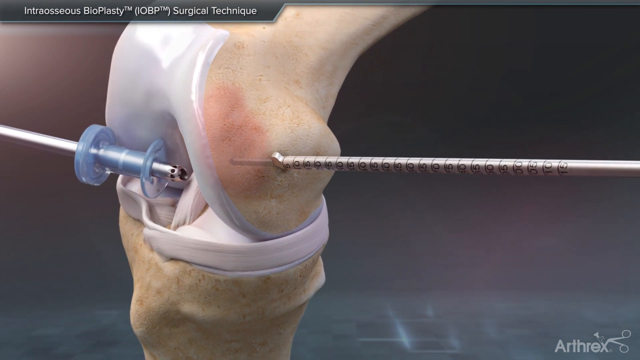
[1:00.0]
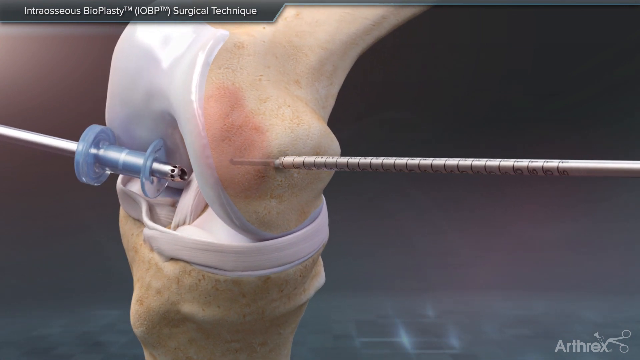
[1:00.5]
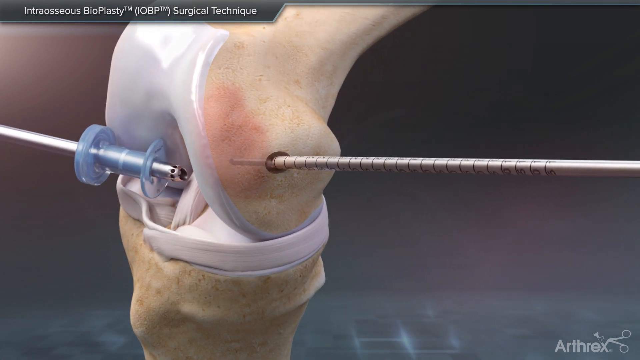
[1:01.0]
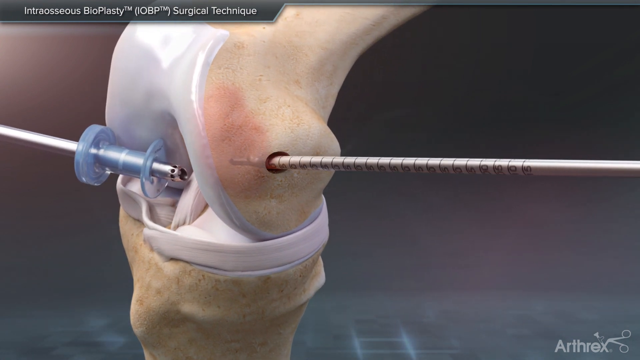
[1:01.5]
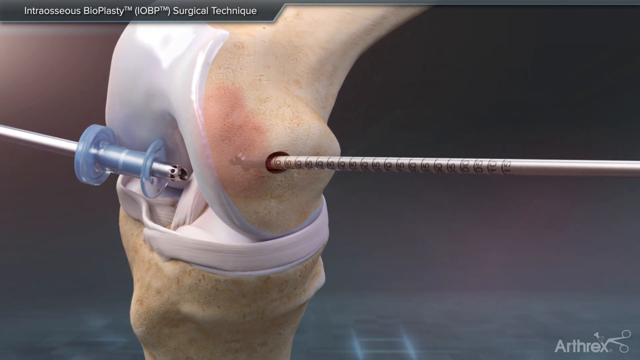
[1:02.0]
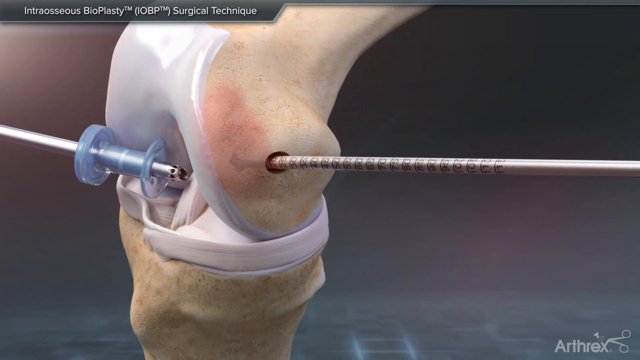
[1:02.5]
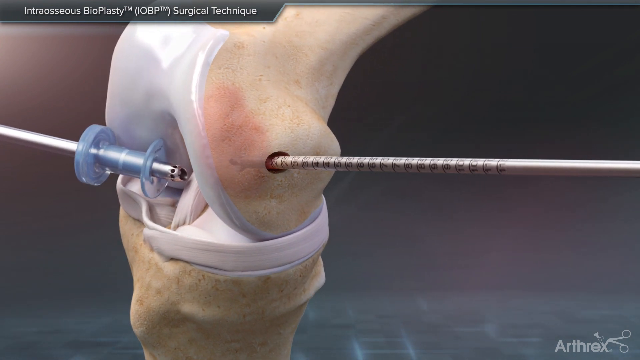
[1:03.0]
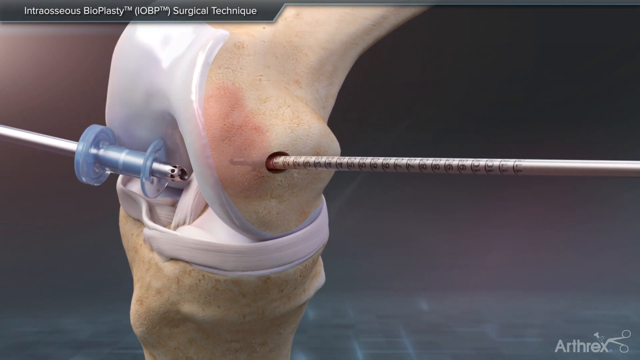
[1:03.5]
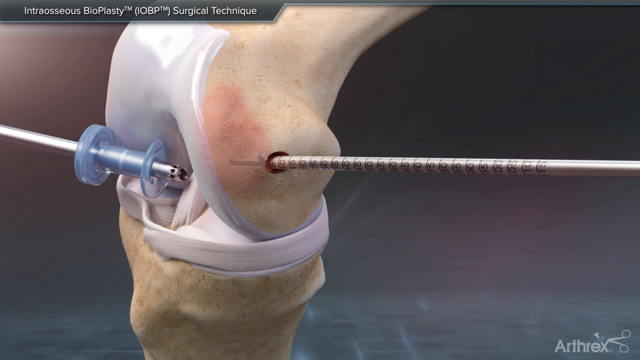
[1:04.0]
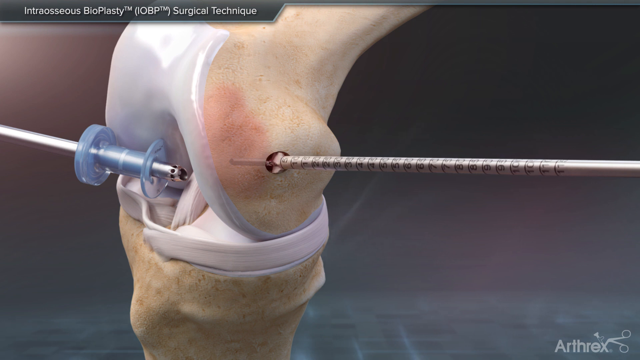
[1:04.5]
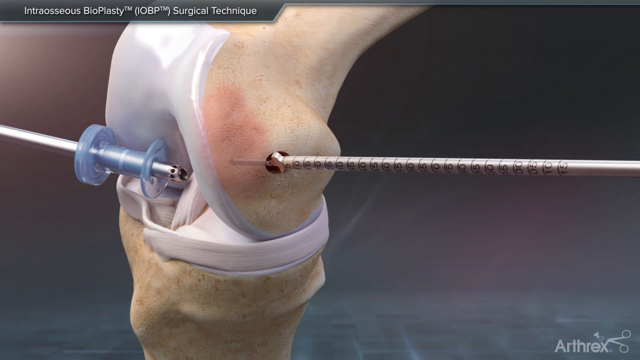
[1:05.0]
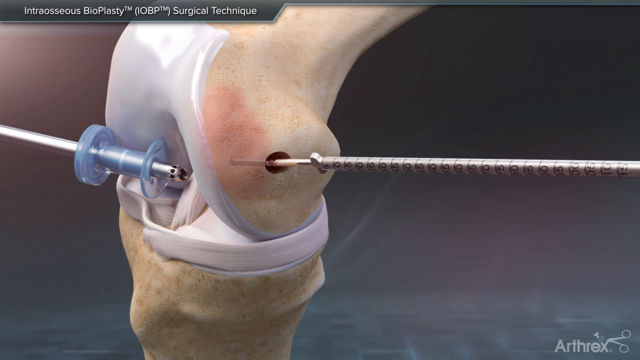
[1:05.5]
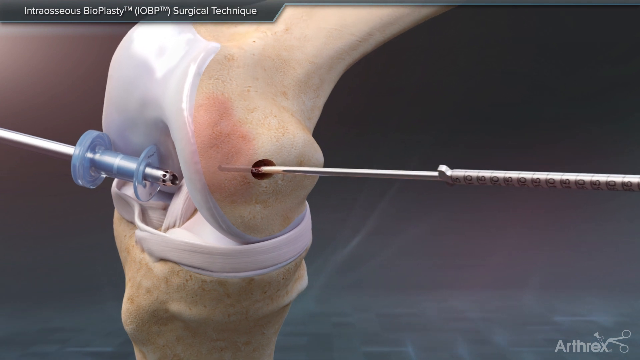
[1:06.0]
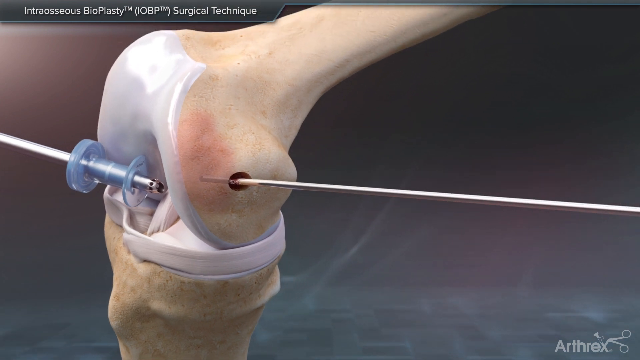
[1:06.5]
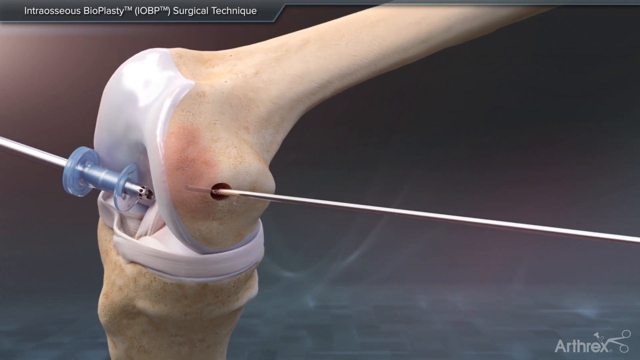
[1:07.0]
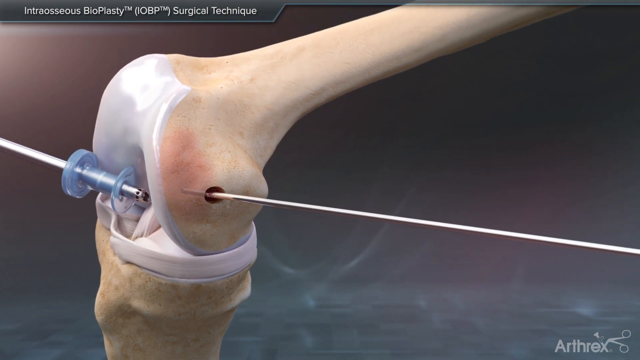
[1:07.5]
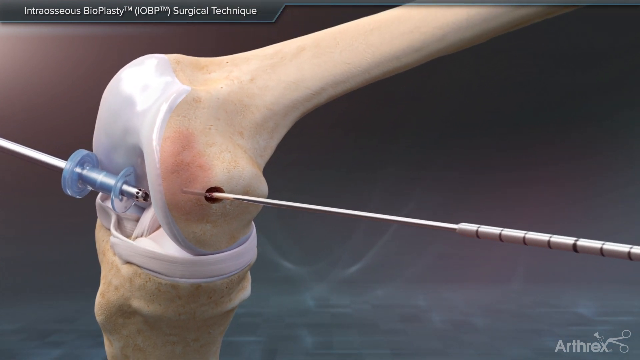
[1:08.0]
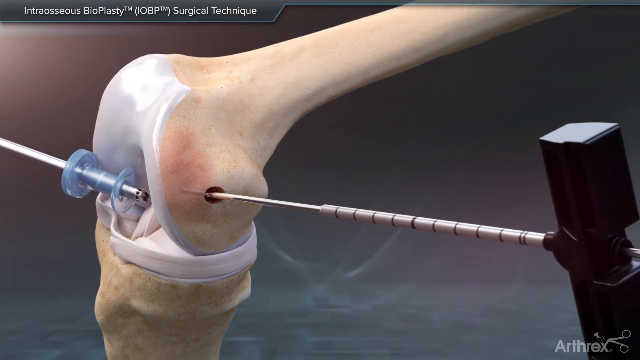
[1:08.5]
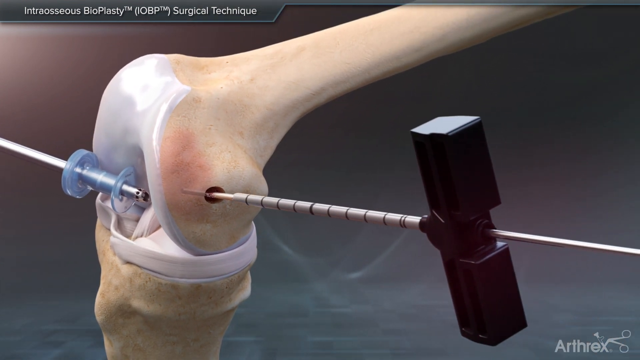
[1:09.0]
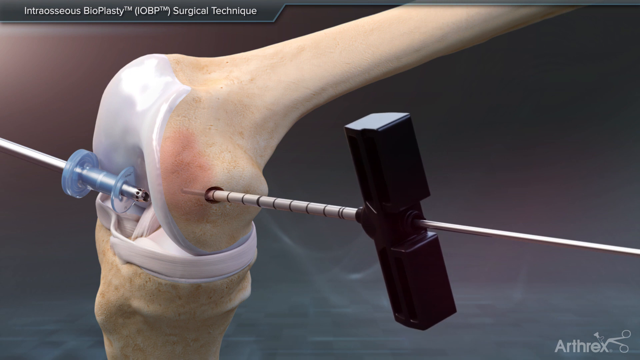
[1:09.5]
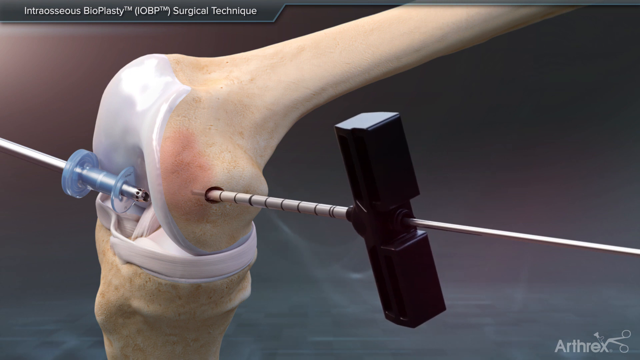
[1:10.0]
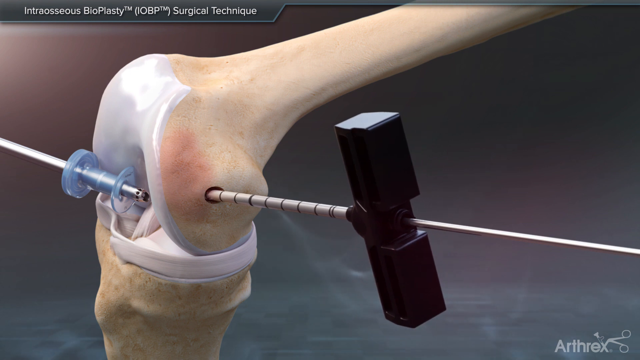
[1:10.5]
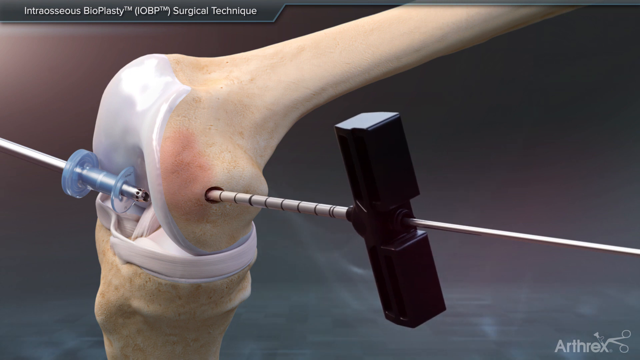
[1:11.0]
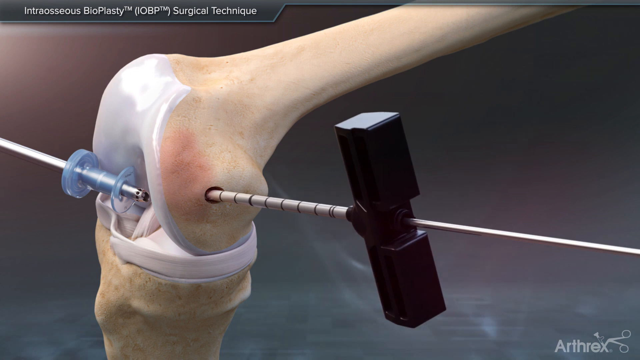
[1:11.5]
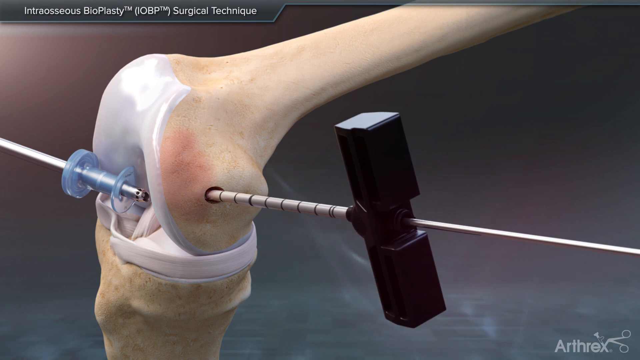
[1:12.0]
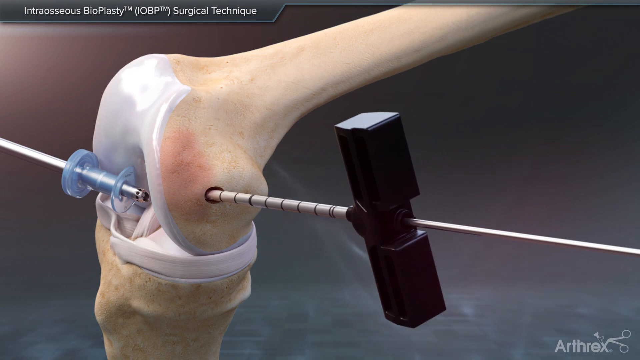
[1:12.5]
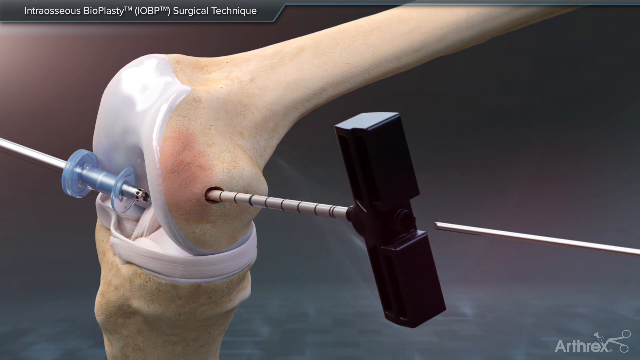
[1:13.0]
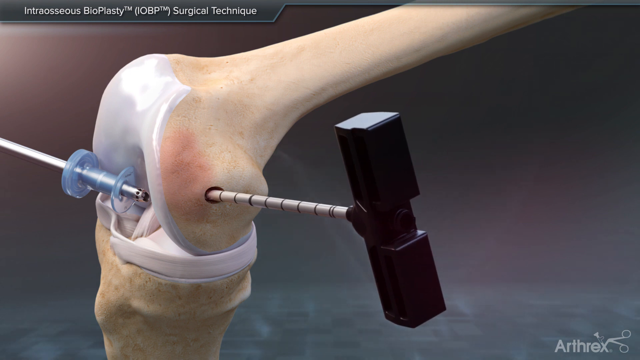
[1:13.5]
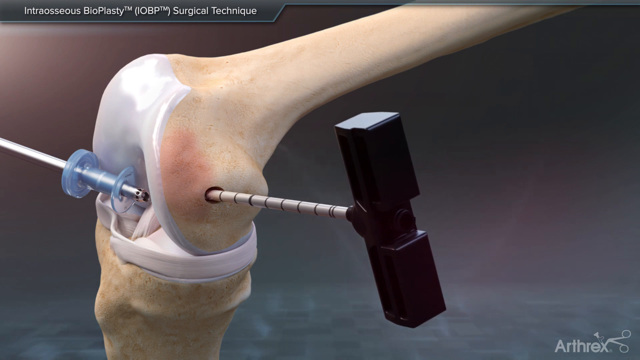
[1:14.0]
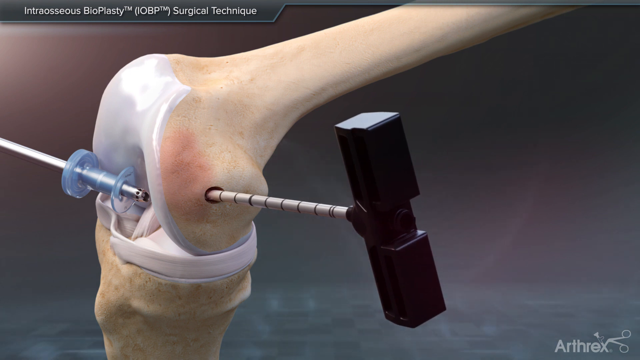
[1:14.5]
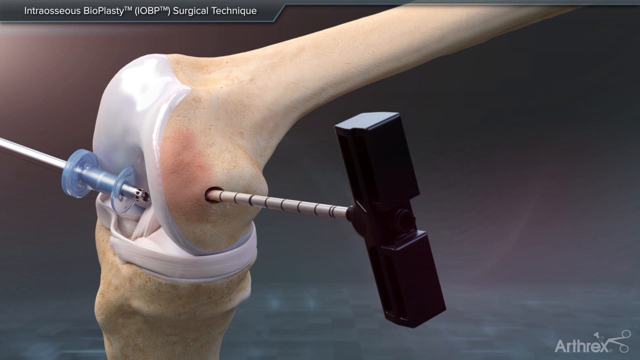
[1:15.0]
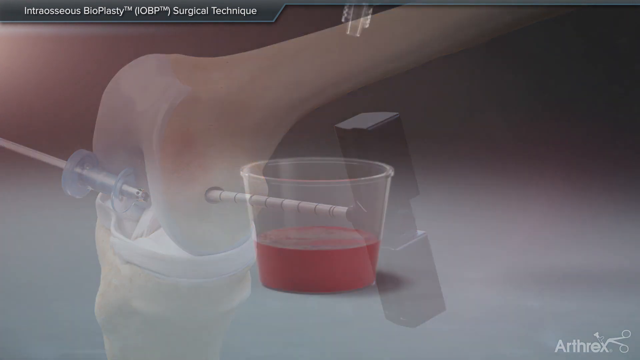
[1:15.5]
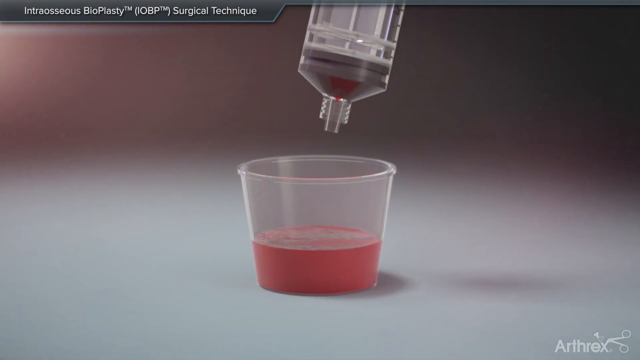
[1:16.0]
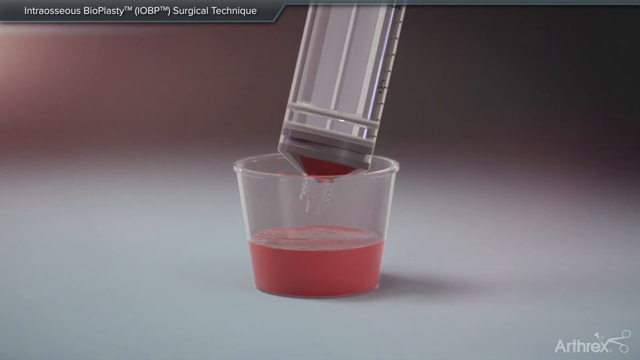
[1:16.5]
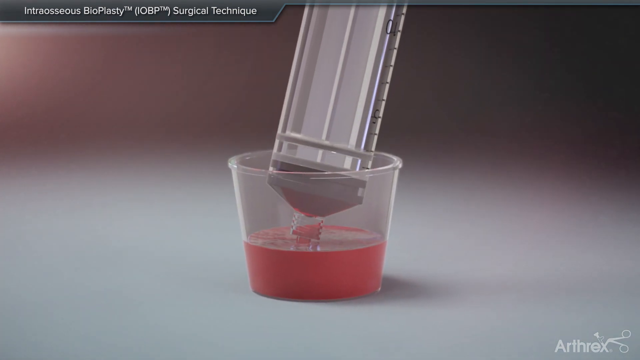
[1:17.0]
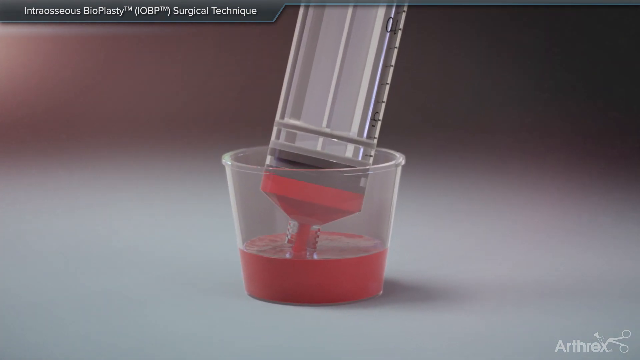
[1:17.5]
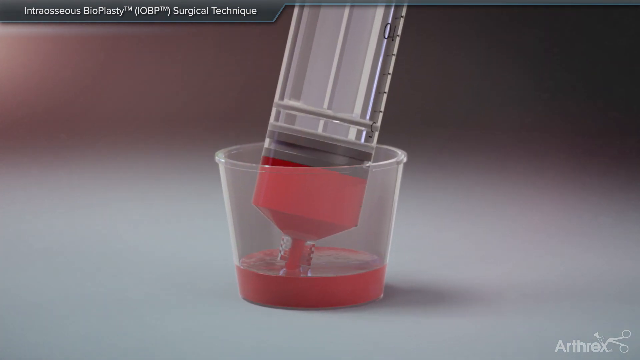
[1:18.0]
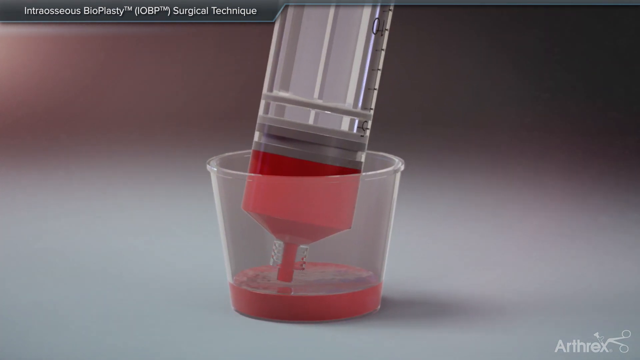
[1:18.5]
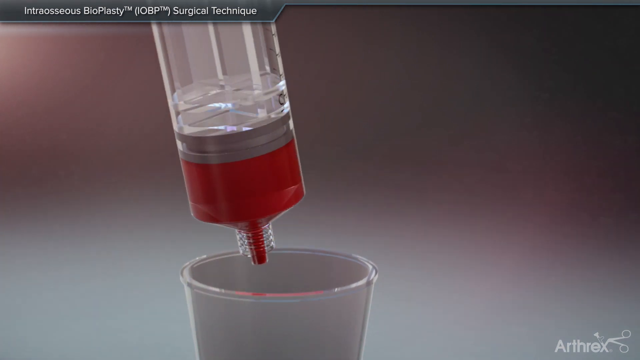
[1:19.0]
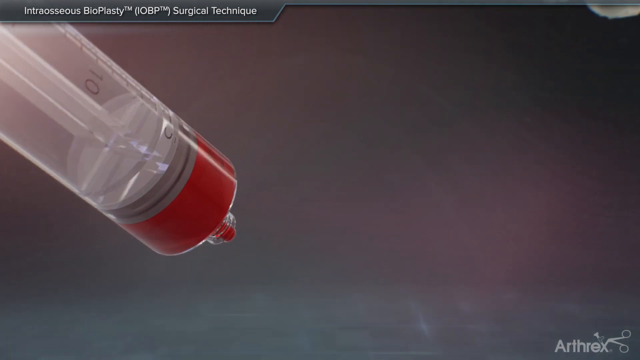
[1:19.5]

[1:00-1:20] The needle is depressed into the leg, and some sort of drill bit encases the needle and starts drilling into the bone of the joint. It drills down, apparently all the way through the bone to where the tissue is, before reaching the ligament in the center, and then drills back out, leaving the needle in place and a channel or hole in the bone. The outer piece is pulled out. Next comes a cylindrical piece with a black knob-like clamp on its edges that screws on around the needle; there are channels within the black clamp. A syringe without a needle is then lowered into a small plastic cup of red liquid, presumably the blood separated using the Anthrex Angel separating device.